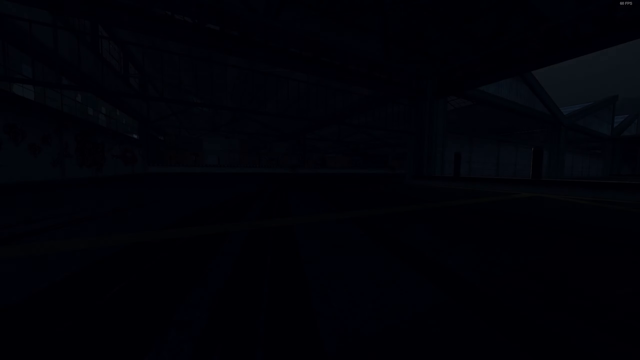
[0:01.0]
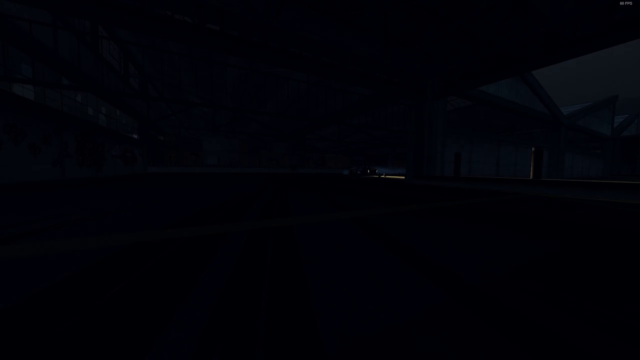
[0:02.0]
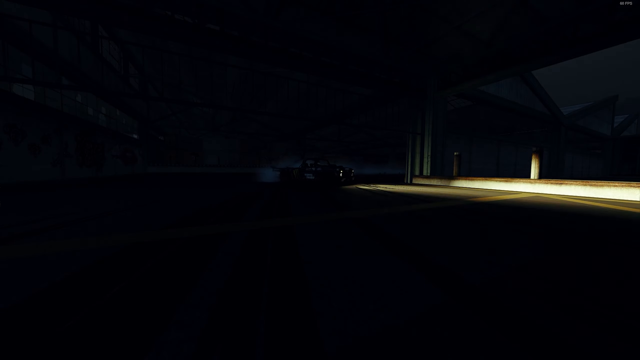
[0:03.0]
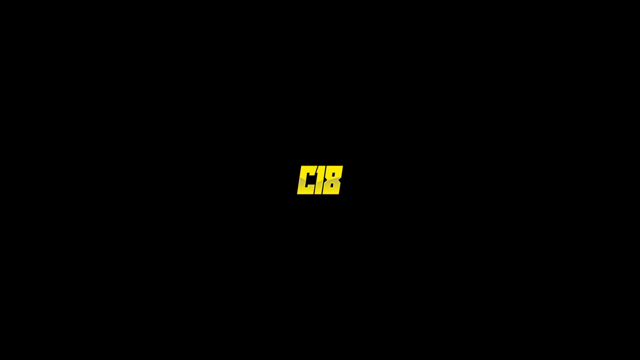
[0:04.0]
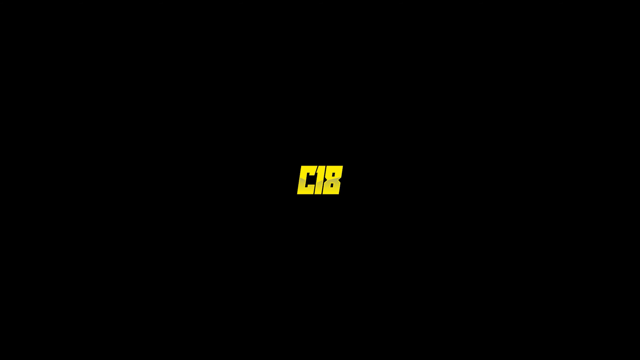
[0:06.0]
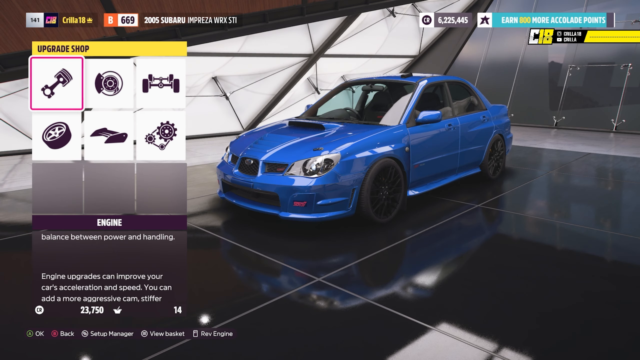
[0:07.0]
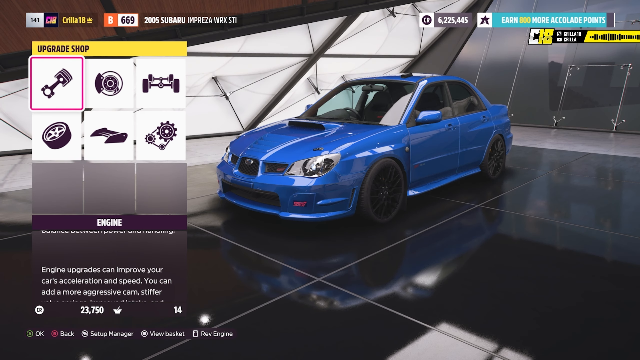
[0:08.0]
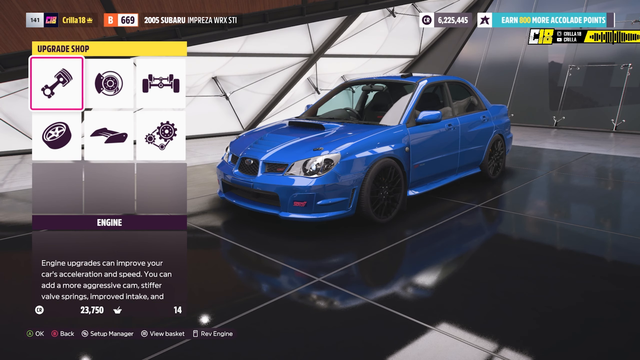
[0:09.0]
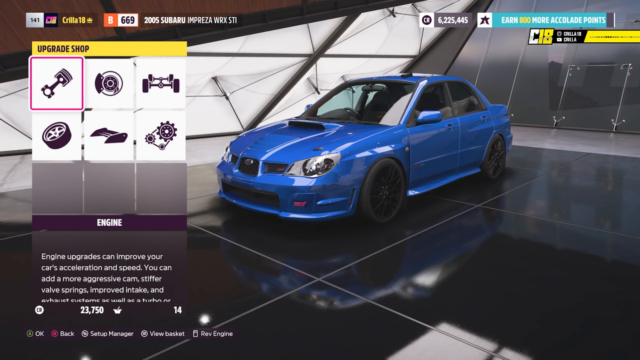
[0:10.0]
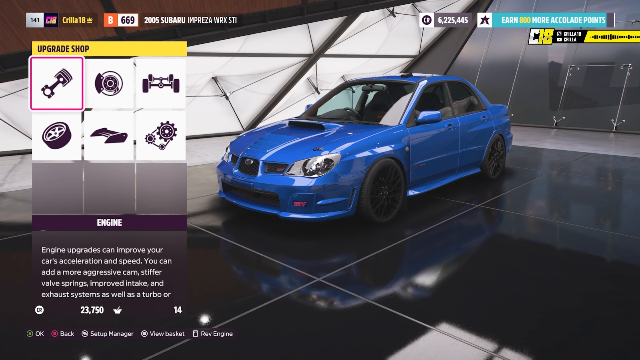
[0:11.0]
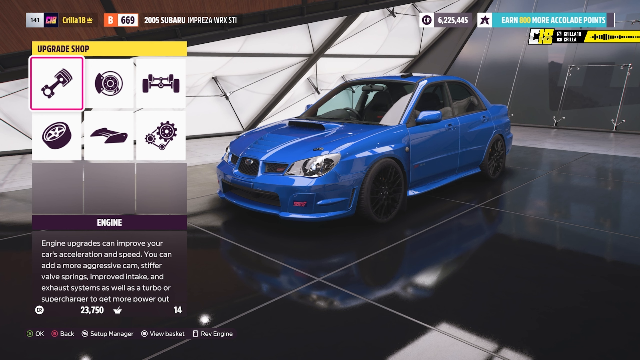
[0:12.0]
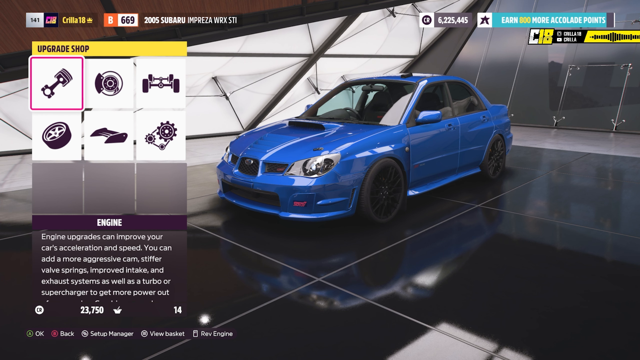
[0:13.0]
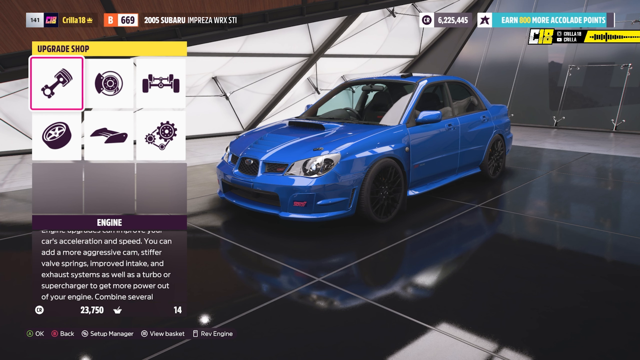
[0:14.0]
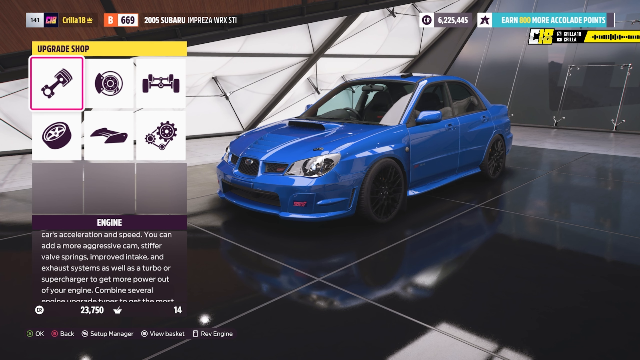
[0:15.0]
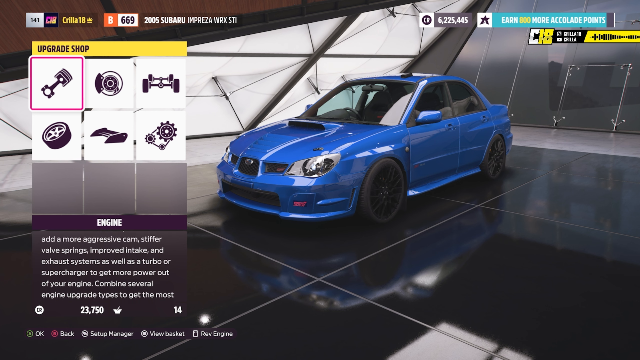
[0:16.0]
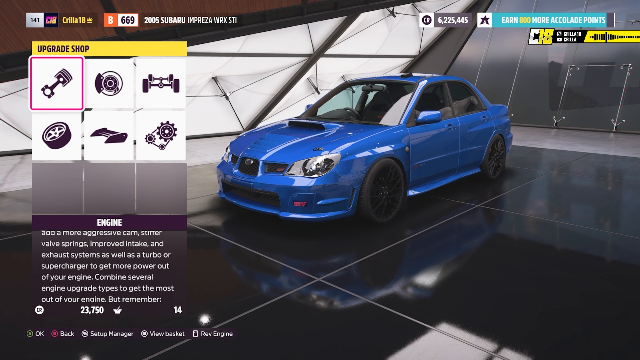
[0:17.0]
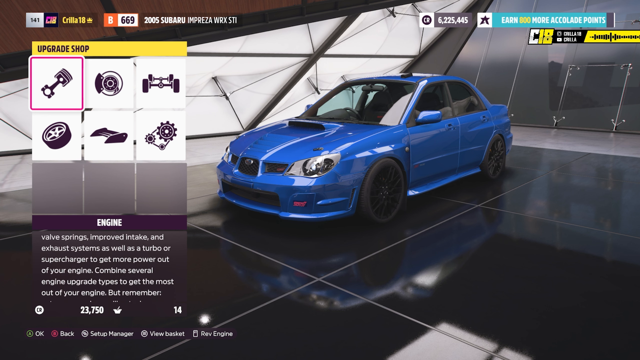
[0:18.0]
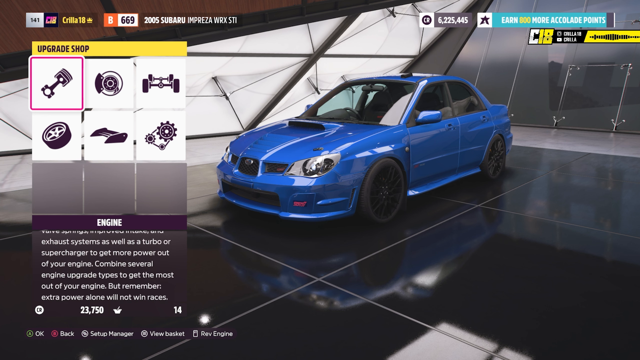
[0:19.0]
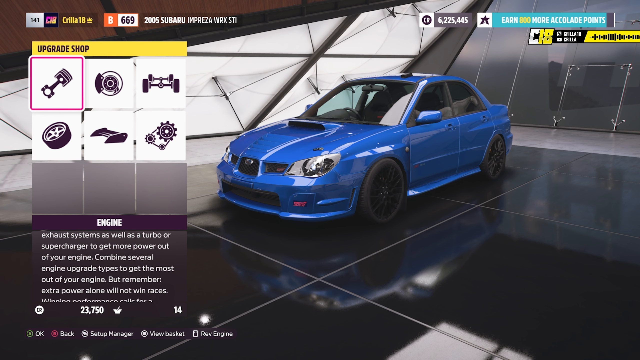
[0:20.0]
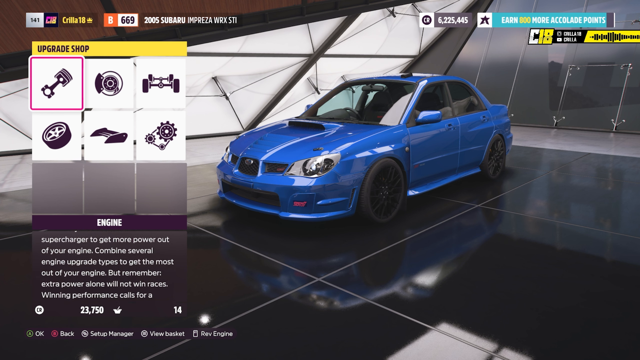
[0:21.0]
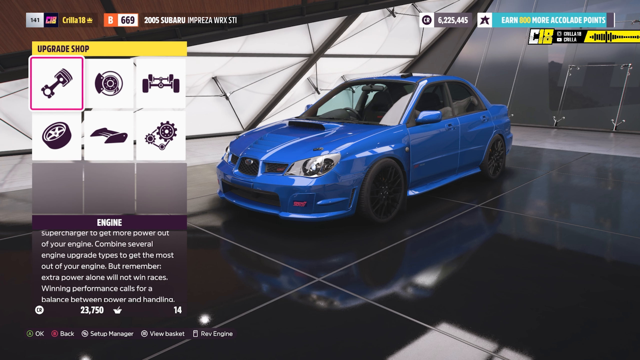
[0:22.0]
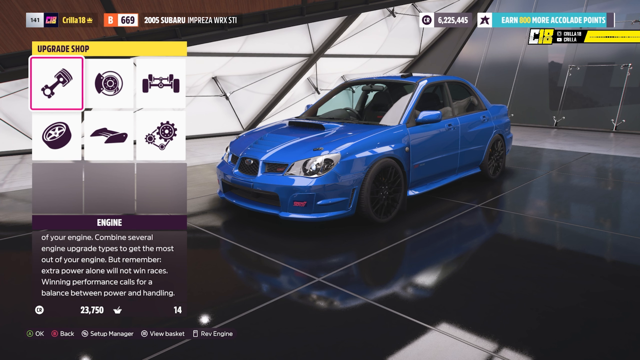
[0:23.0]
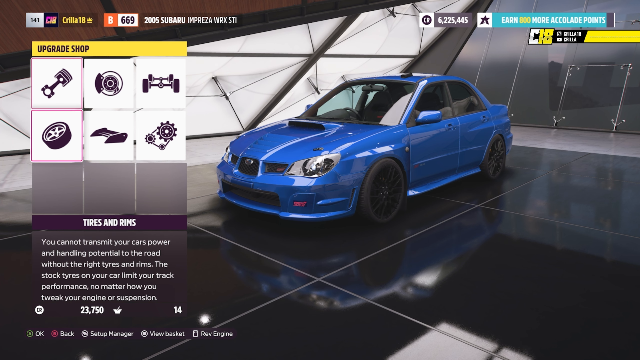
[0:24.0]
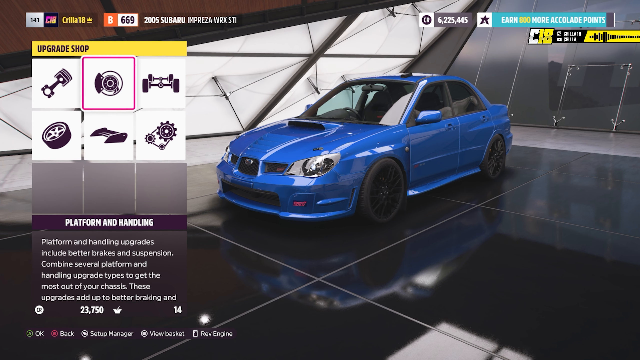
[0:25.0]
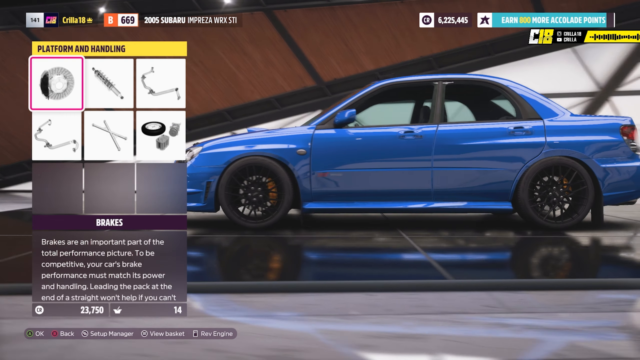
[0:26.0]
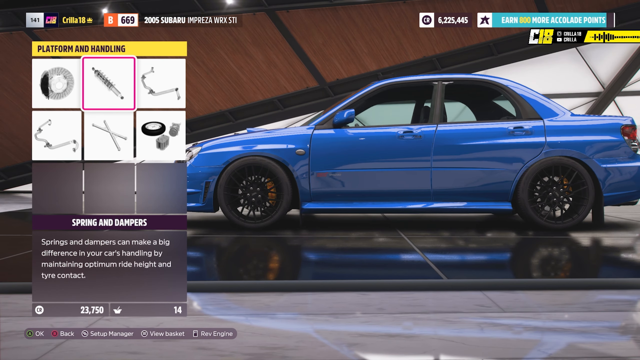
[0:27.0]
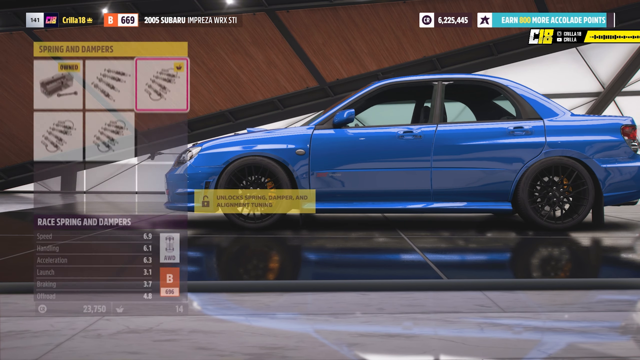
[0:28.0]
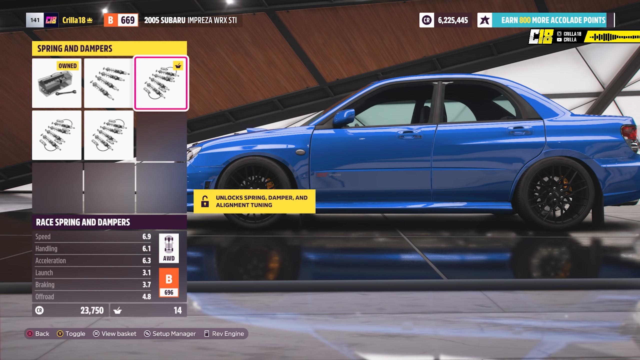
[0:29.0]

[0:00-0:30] A car slides through the dark, drifting toward the camera, before the word "C18" appears on the screen in bright yellow. After a brief pause, the video cuts to the customization menu for an in-game car, a blue 2005 Subaru Impreza RX STI. The player is in the shop looking at customization options, hovering over the engine customization option as text scrolls across the screen explaining what that option does. The player switches between the options, looking at what can be selected, then goes to the platform and handling customization menu. They look over the options there, settle on the spring and dampeners, and look at the five available options to choose from.